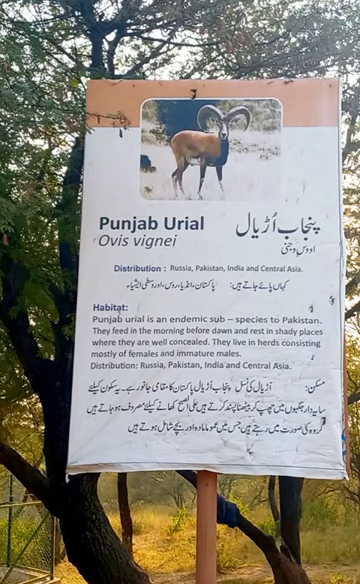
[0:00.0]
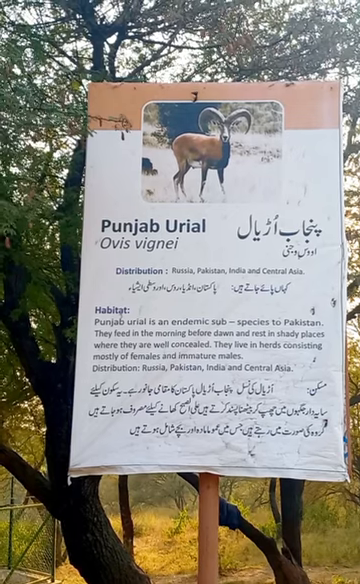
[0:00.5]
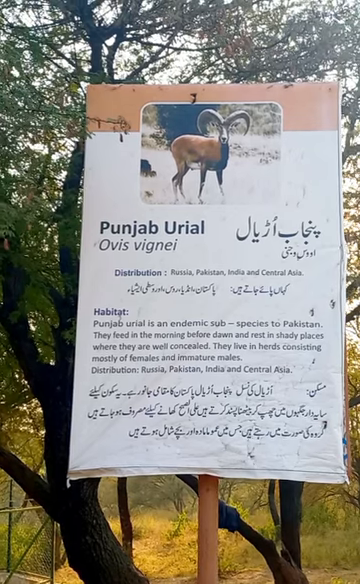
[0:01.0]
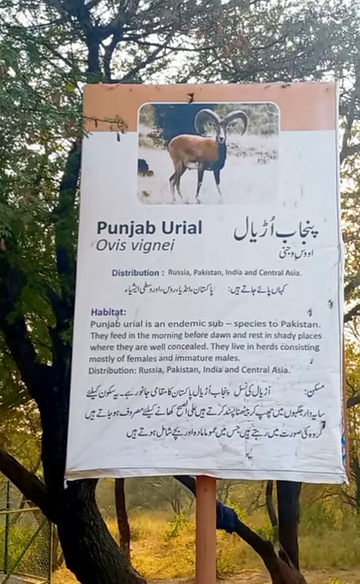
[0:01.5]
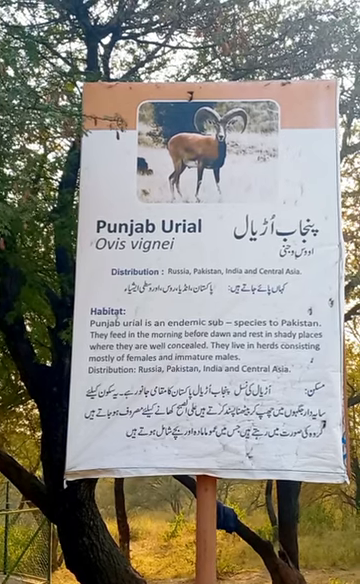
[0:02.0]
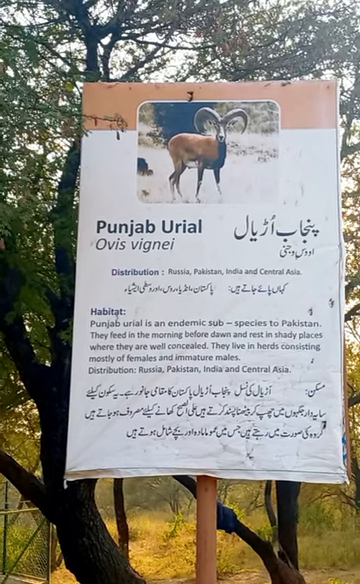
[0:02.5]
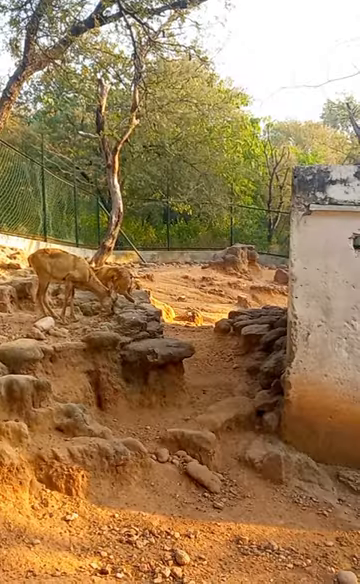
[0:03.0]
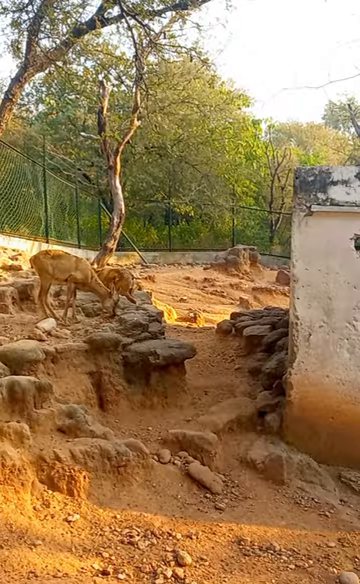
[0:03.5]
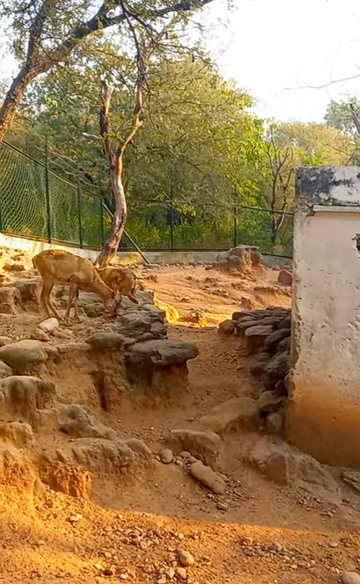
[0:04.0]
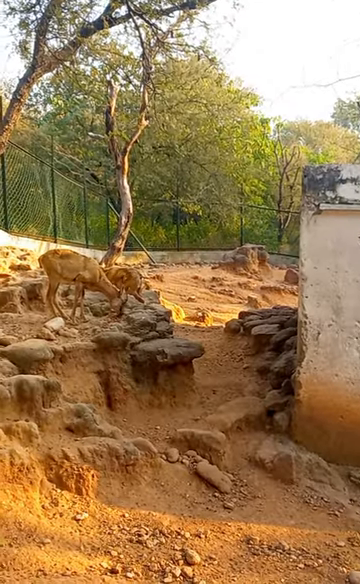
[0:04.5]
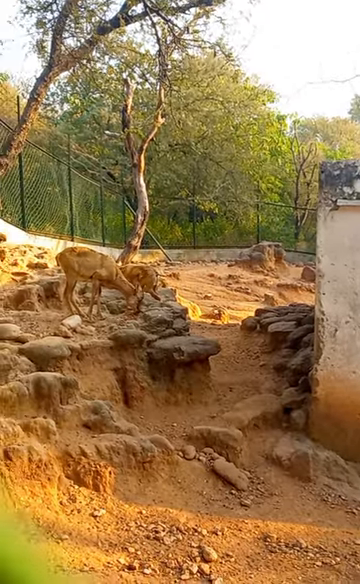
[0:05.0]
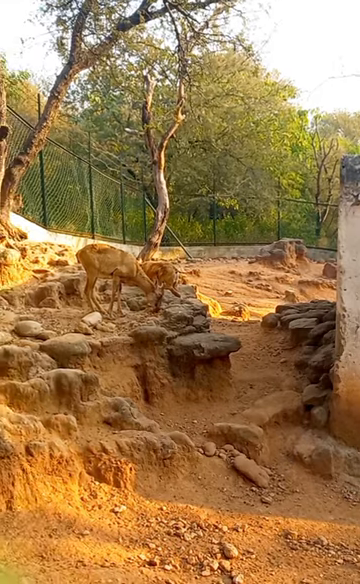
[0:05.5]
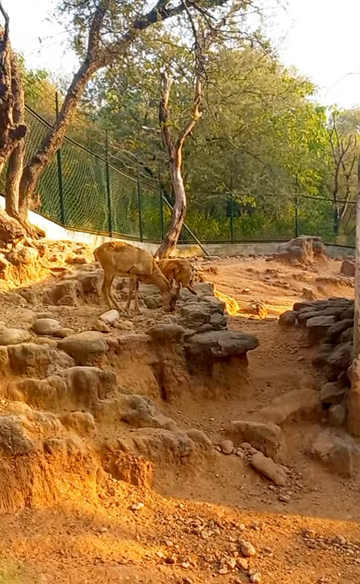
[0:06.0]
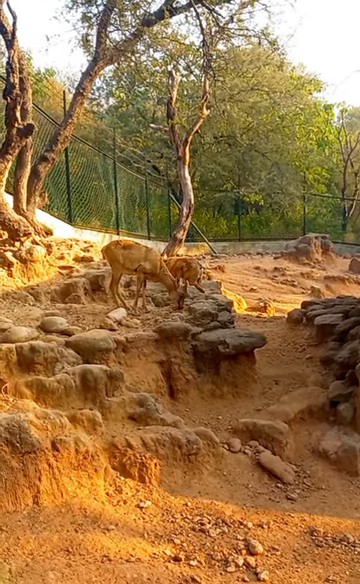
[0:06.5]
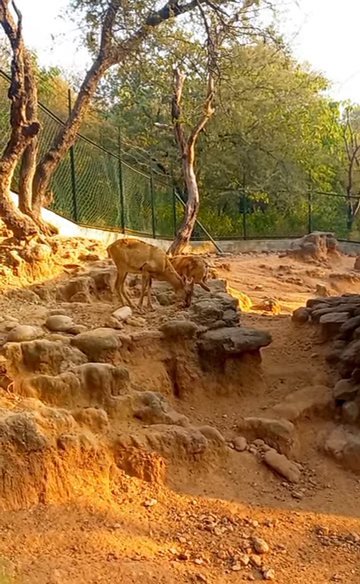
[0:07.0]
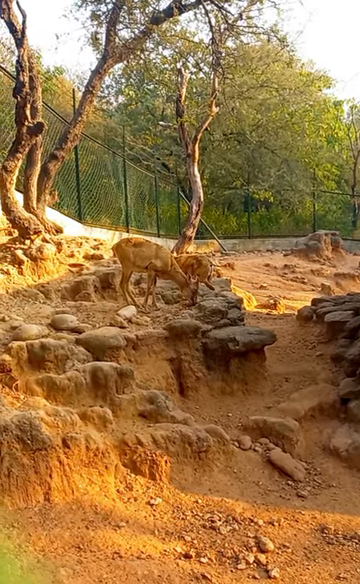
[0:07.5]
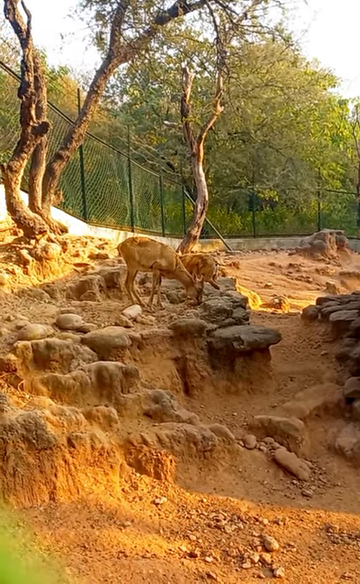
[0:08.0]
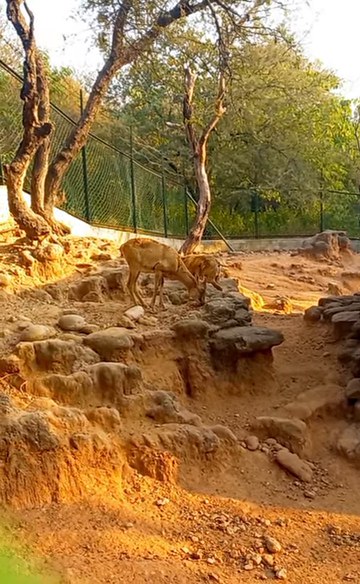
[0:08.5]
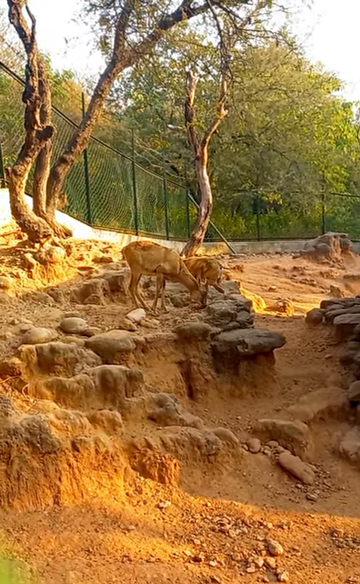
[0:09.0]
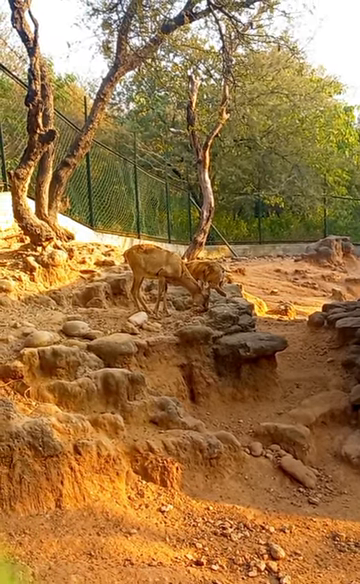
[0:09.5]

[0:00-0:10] A sign has a photo at the top showing some sort of horned animal, which looks like a deer with antlers or maybe a goat with horns. The sign has English text, and underneath each line of English is a line of text in what appears to be Hindi. The sign identifies the animal as a Punjab Uriyal, with a distribution in Russia, Pakistan, India and Central Asia. It describes the habitat as an endemic subspecies to Pakistan that feeds in the morning before dawn and rests in shady places where they are well concealed, and says they live in herds consisting mostly of females and immature males, then lists the same distribution again. The sign is in front of a large tree with big green leaves. The scene then transitions to a dirty, hill-like area that looks like the inside of a zoo enclosure. A building is on the right of the scene, and two of the creatures, without the large horns seen in the photo on the sign, are seemingly sifting through the dirt with their tongues.